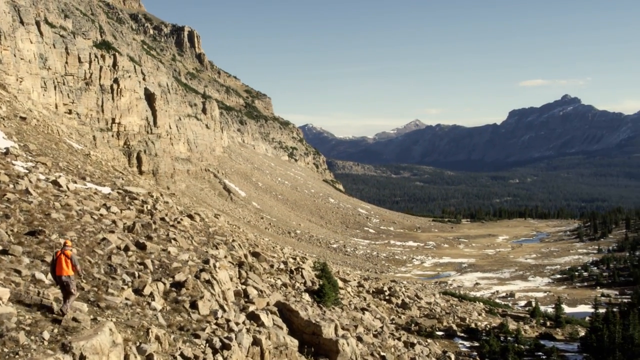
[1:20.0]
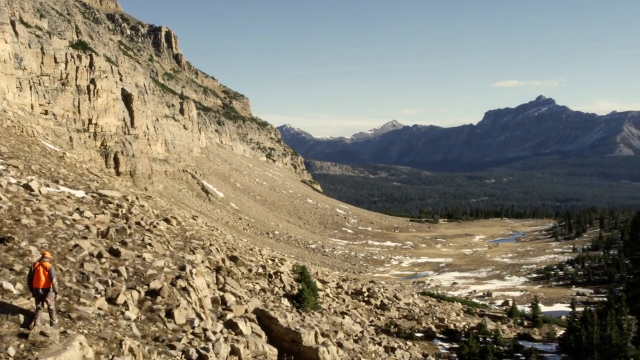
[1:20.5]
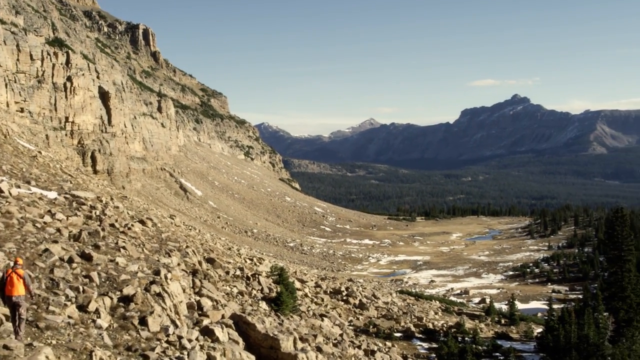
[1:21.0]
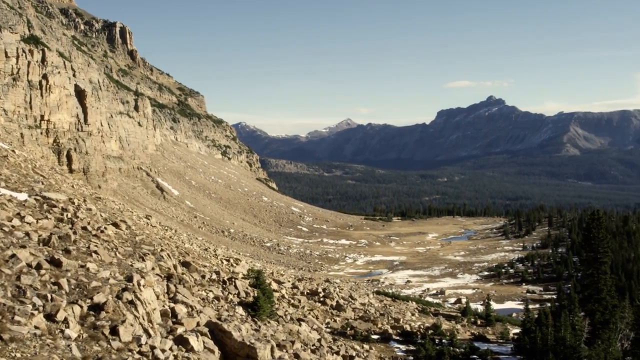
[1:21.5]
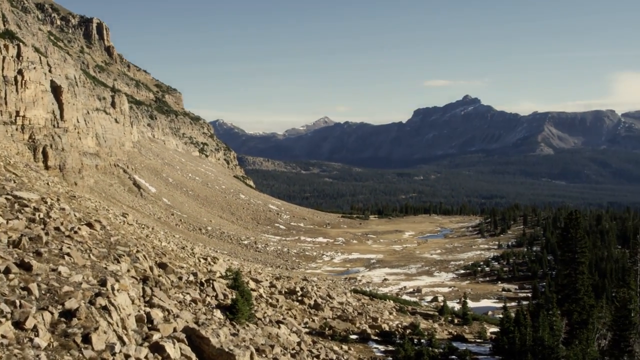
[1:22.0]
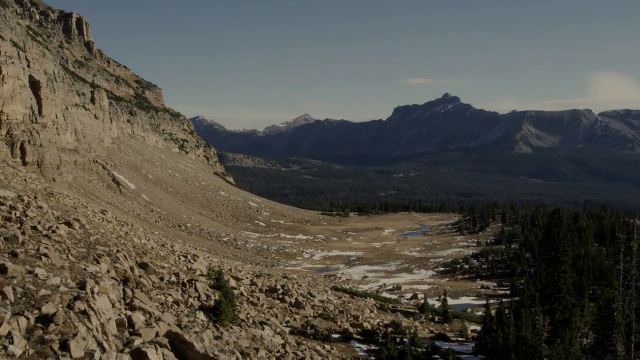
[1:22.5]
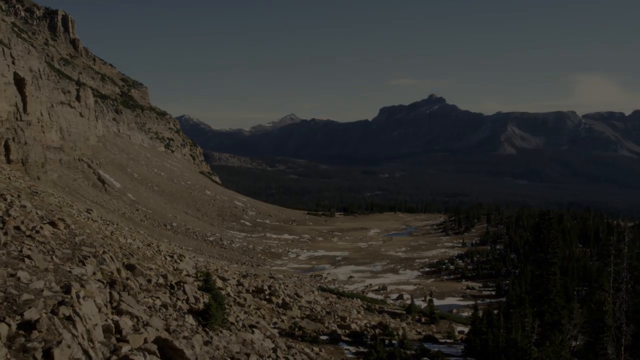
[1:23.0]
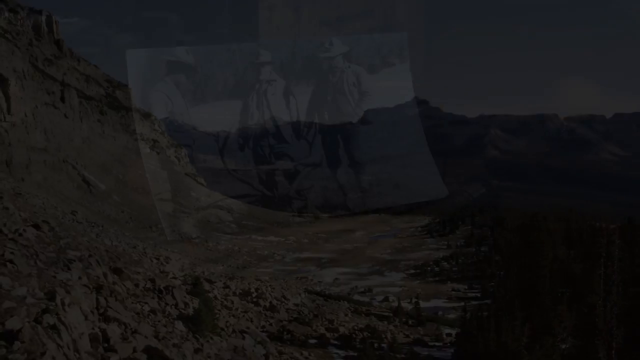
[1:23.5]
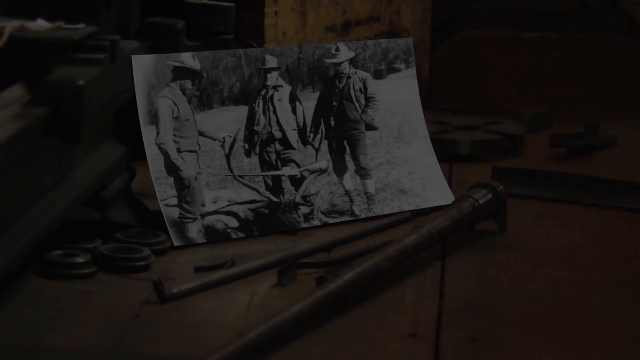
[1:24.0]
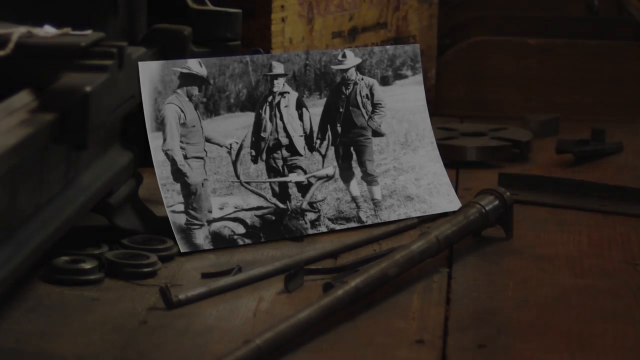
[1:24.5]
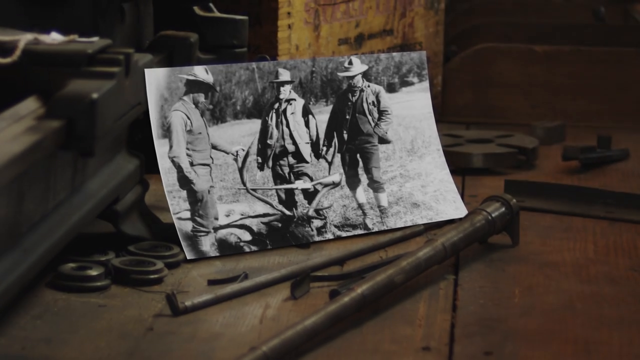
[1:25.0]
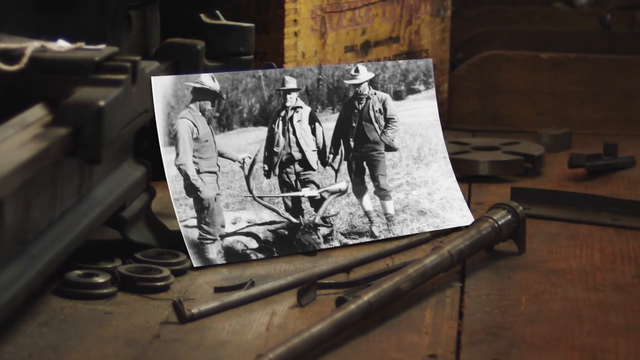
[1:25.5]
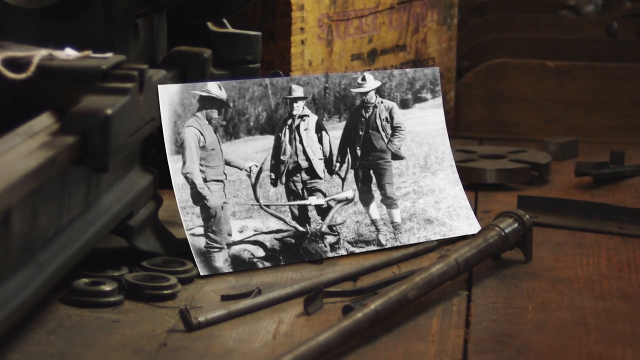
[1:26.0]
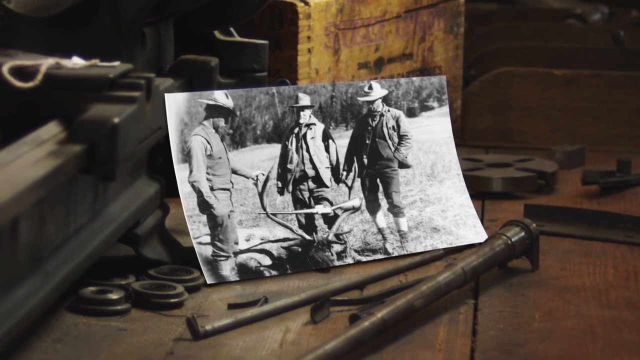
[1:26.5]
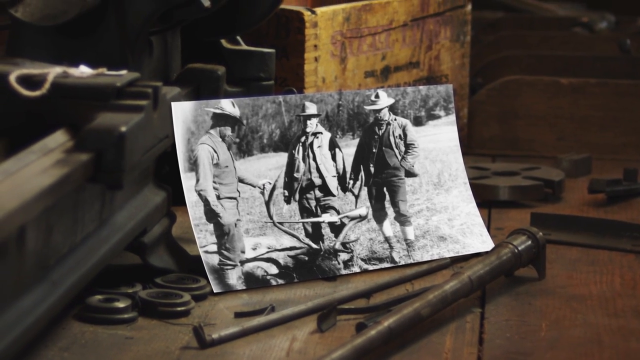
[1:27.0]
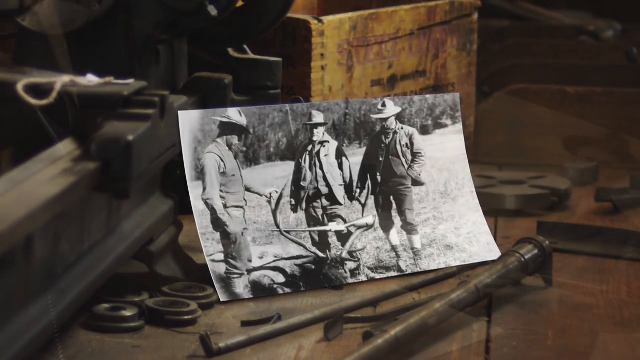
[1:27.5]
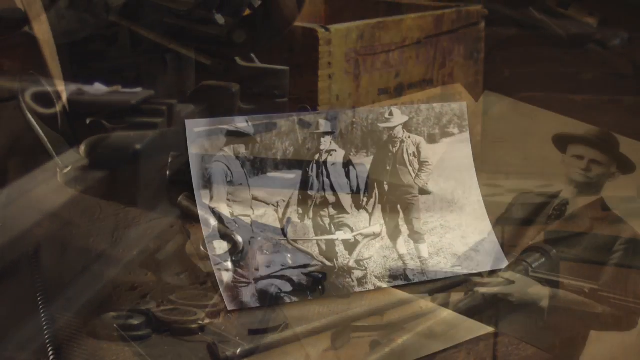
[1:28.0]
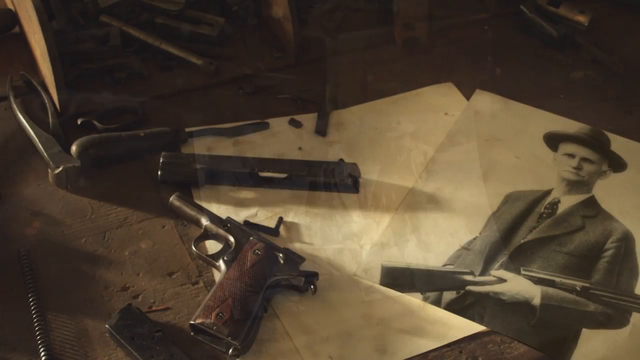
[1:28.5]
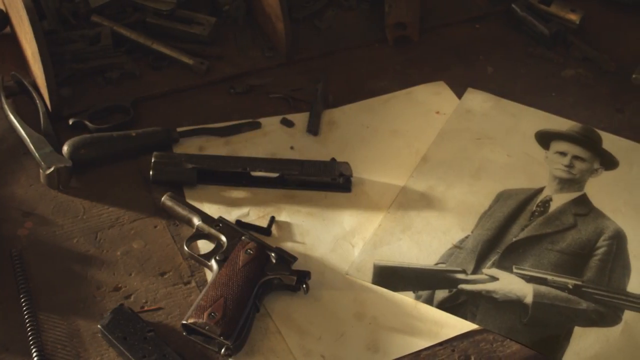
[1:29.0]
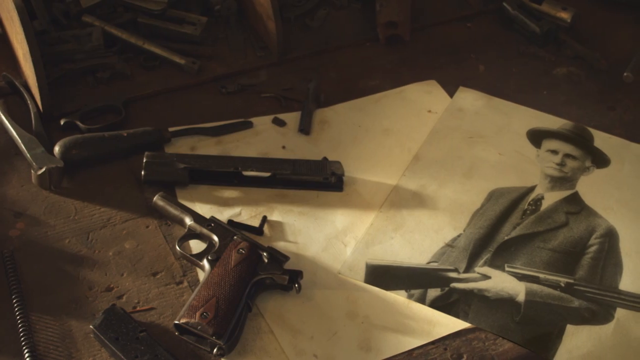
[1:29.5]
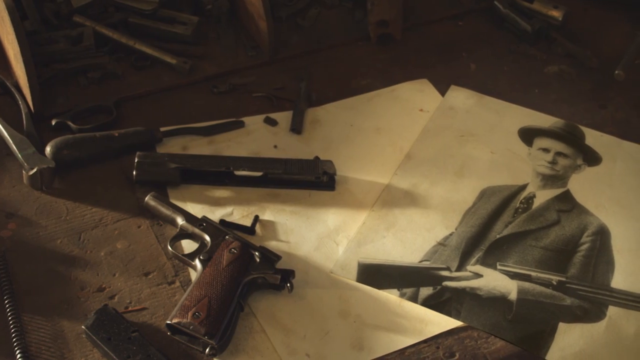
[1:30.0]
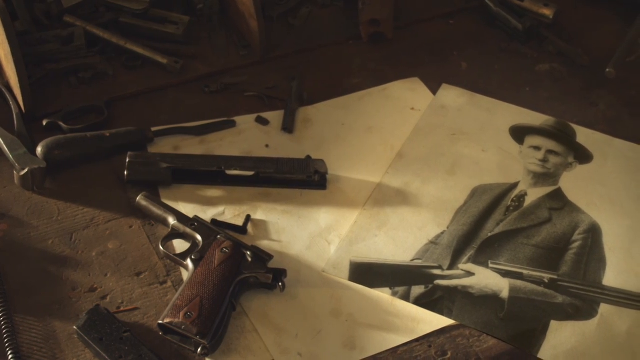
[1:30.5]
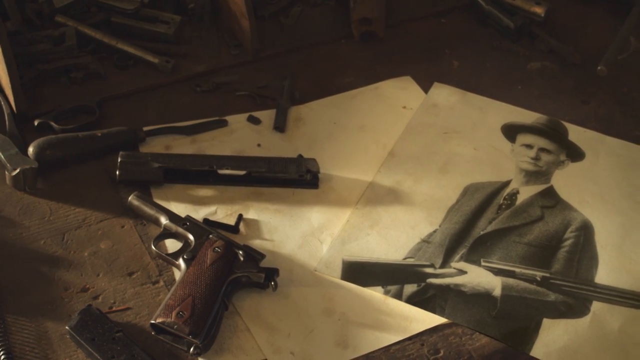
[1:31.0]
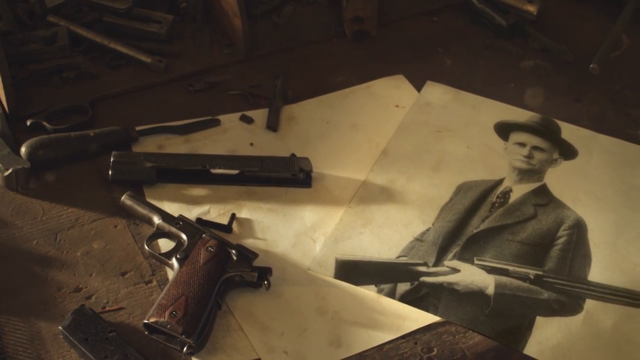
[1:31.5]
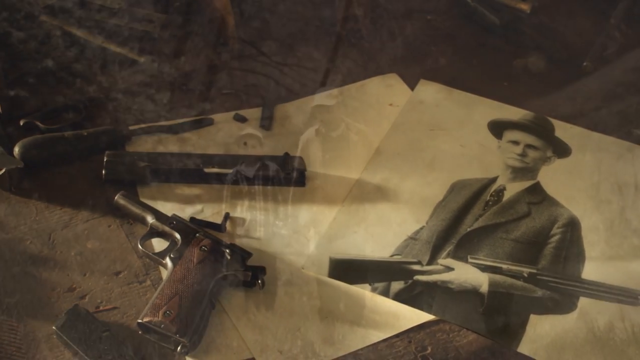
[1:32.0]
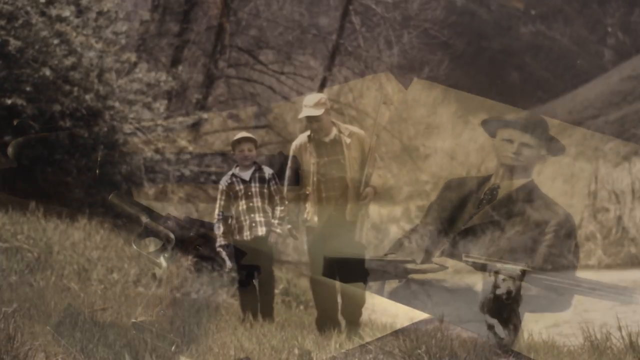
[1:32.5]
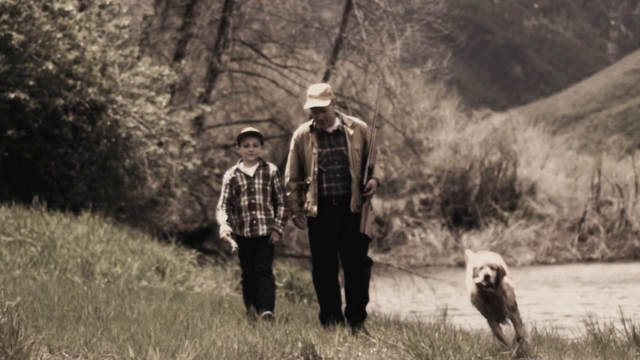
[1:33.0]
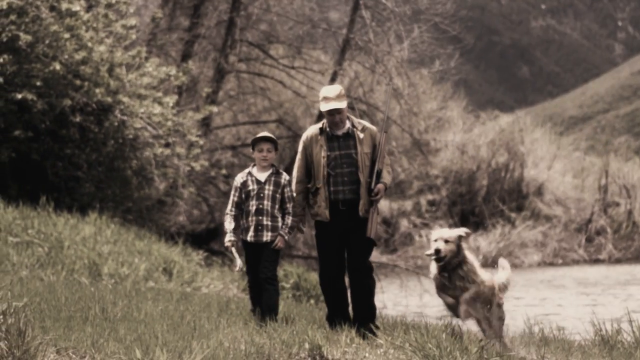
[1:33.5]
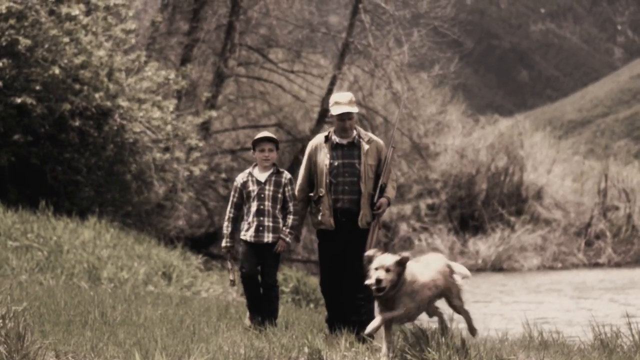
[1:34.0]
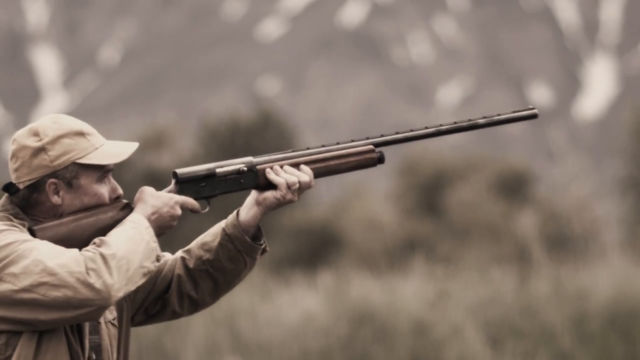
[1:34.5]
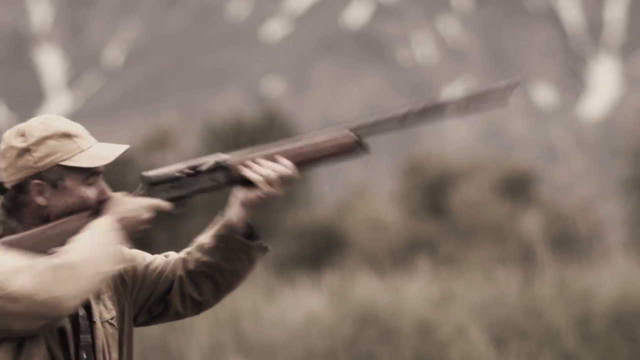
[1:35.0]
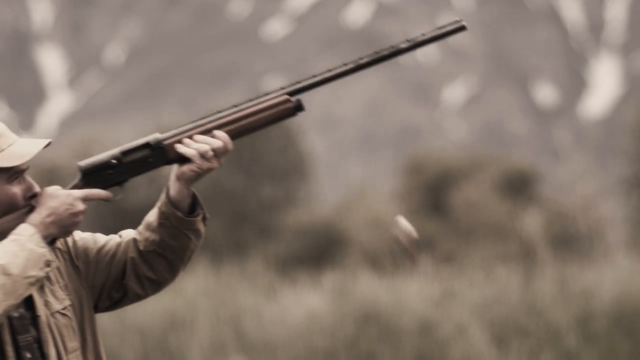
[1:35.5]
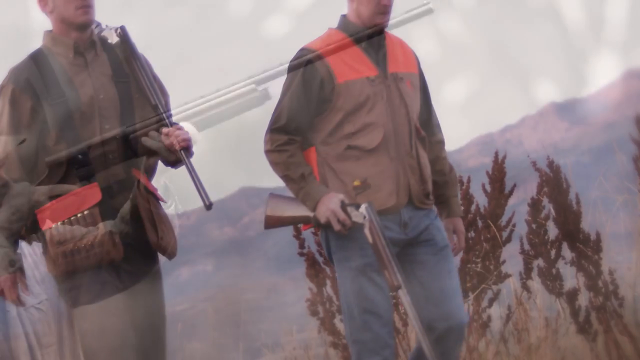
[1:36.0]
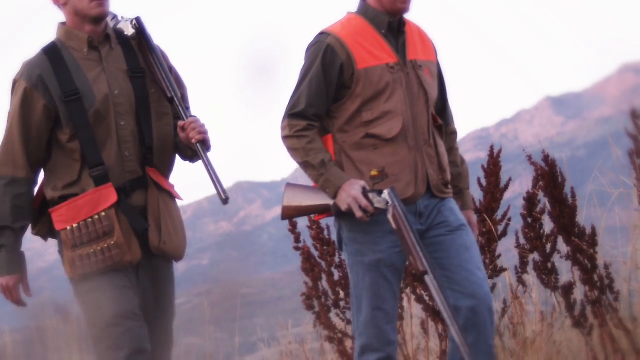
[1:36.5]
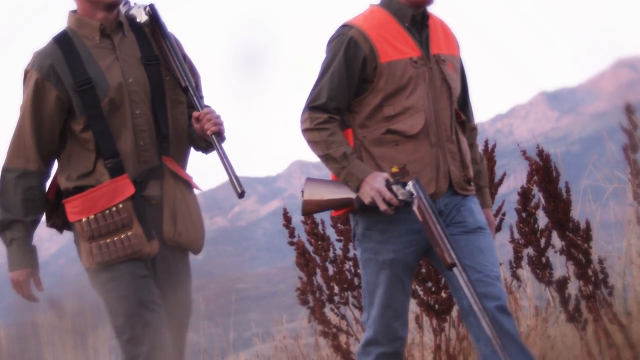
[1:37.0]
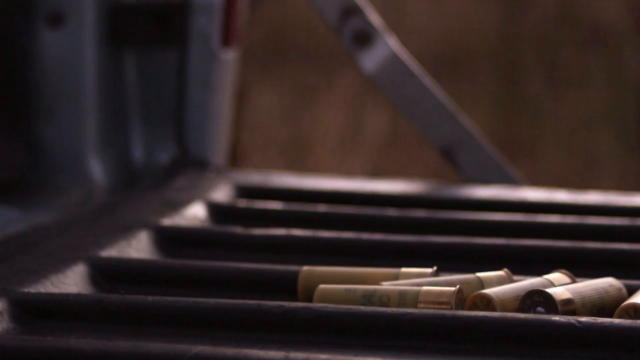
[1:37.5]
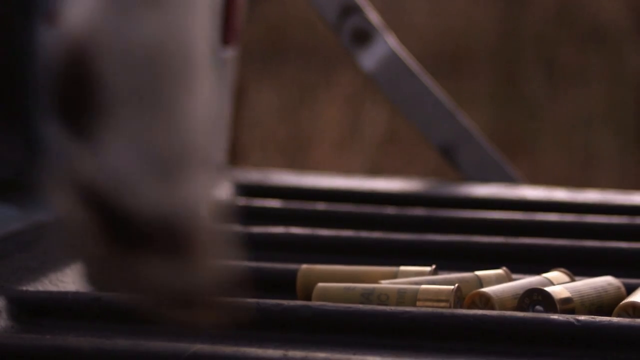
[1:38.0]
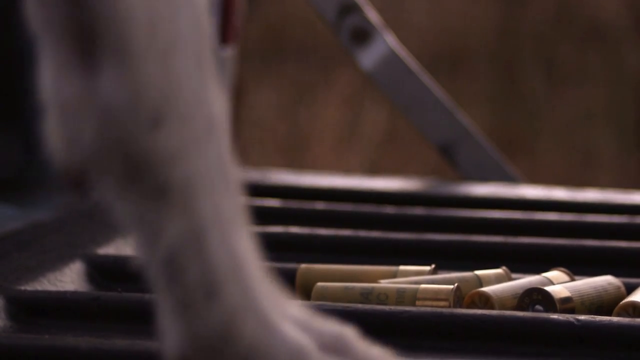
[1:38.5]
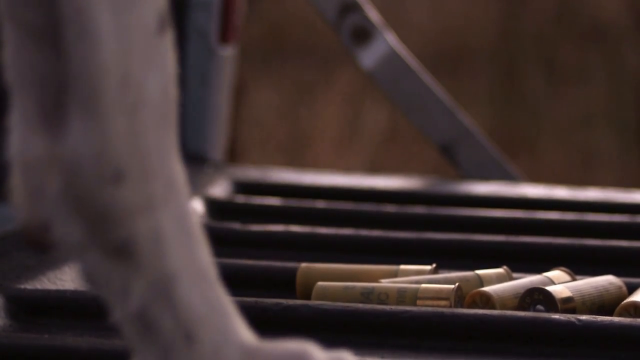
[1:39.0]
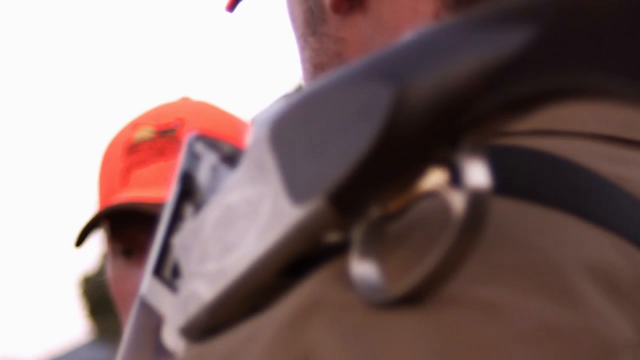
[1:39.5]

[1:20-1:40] The walk continues near the mountains, where there are many stones on all sides and much less grass than before. Some very old photographs of hunters then appear on screen: one shows three hunters holding a dead deer, with the hunters in clothes and a straw hat over the deer. Another old image shows a man with a shotgun in his hand and a black hat, the gun next to a clip loader; the gun looks very old. In another scene, a child walks through the forest with a man and a dog, carrying guns, and a man appears shooting a shotgun upward, probably at one of the ducks. Two more hunters walk, and spent shotgun shells fall after the shot is fired.